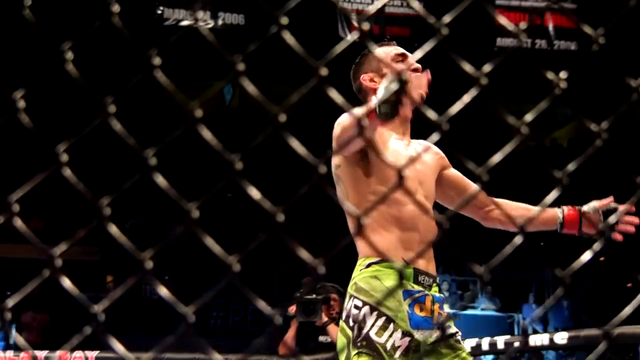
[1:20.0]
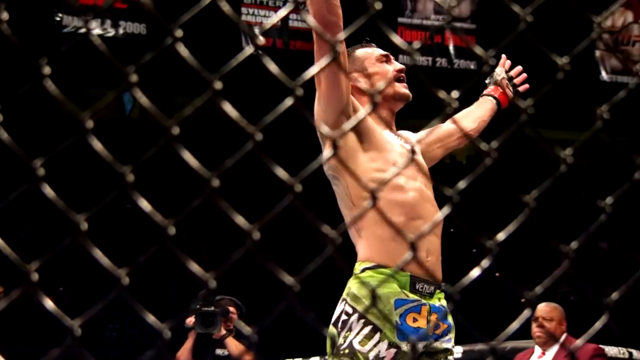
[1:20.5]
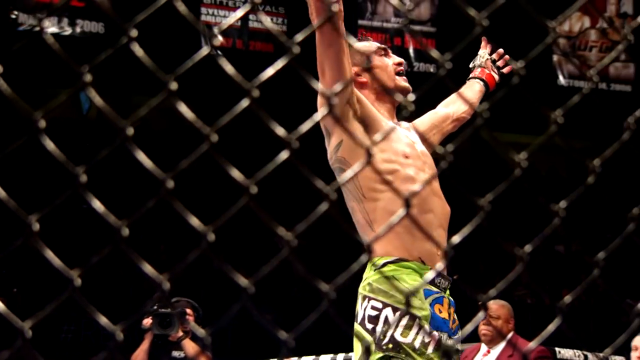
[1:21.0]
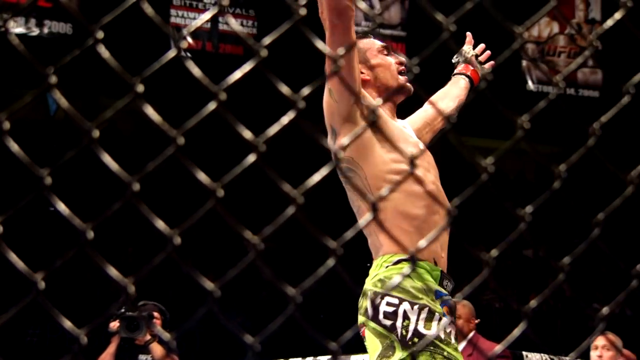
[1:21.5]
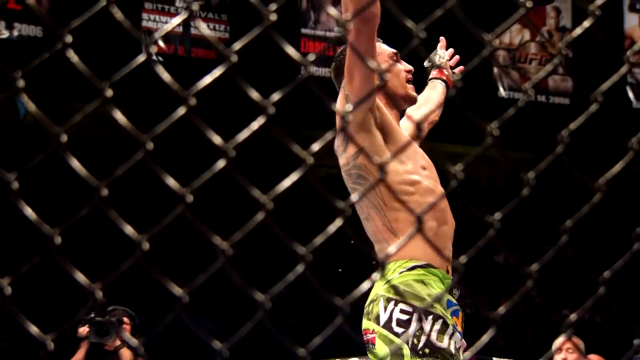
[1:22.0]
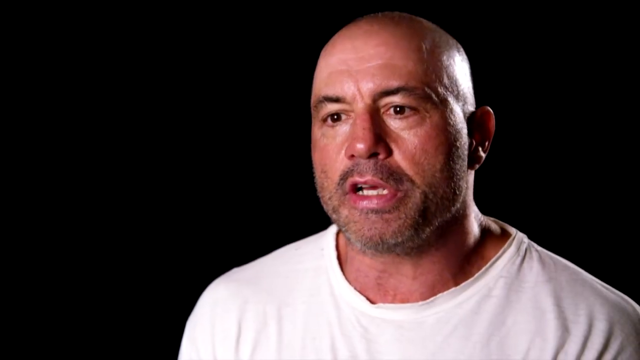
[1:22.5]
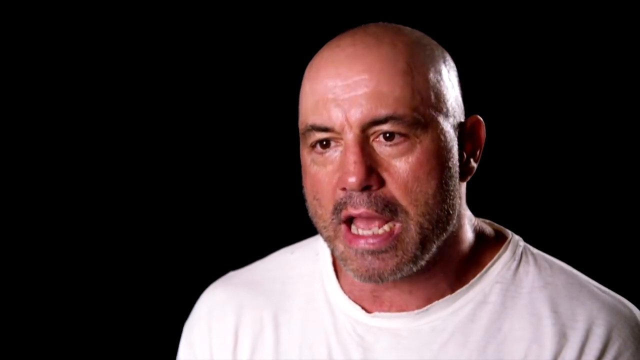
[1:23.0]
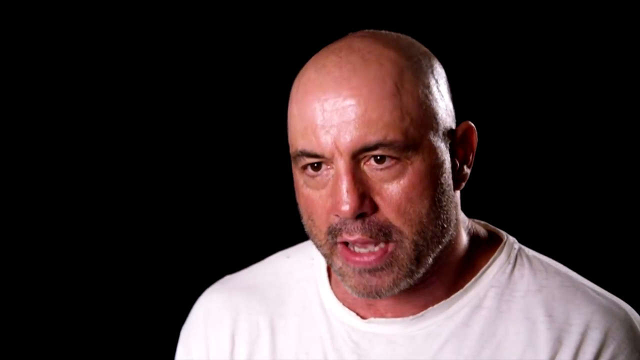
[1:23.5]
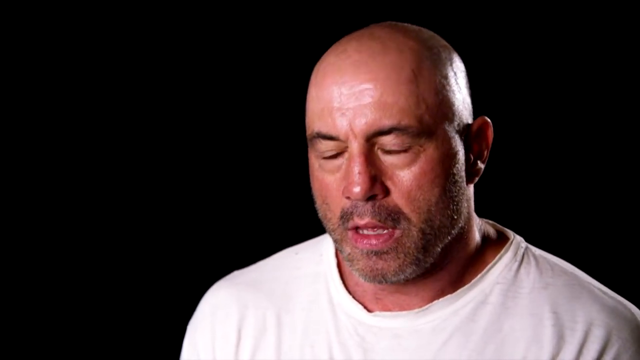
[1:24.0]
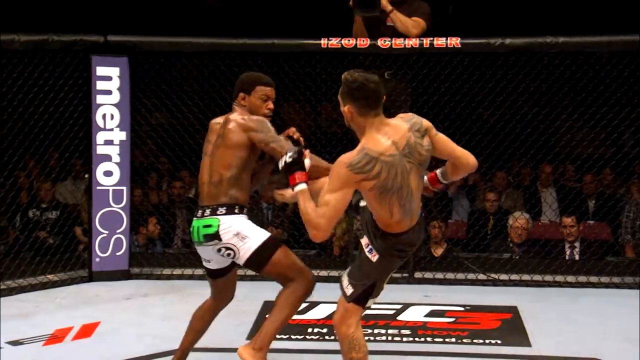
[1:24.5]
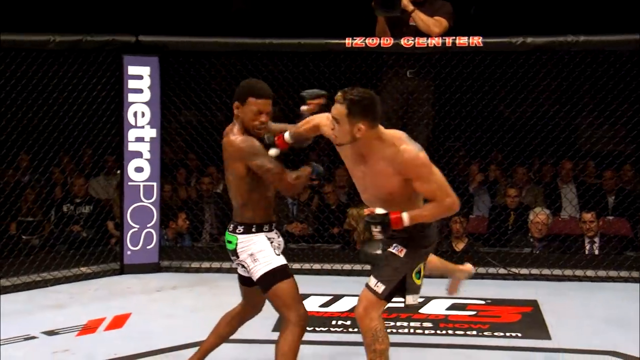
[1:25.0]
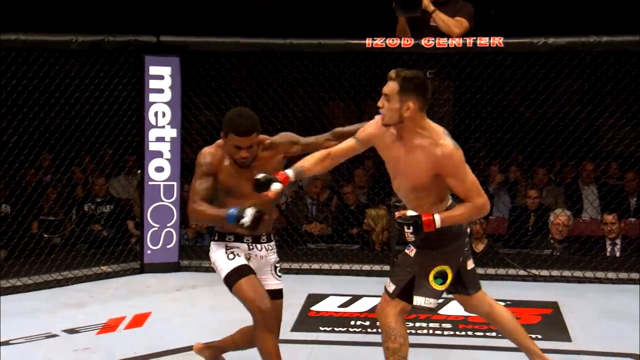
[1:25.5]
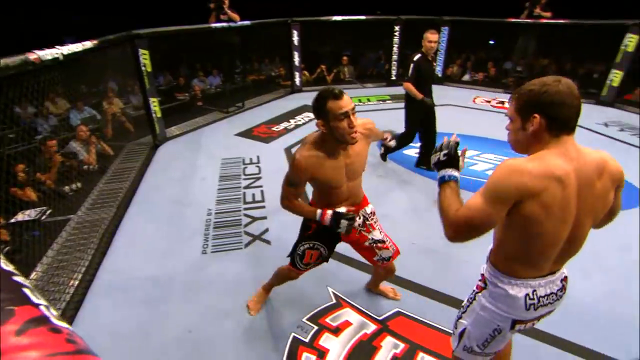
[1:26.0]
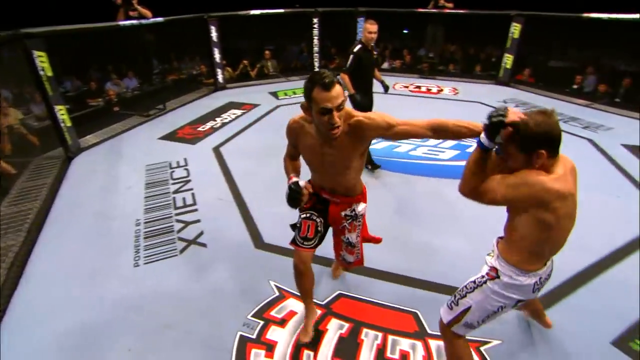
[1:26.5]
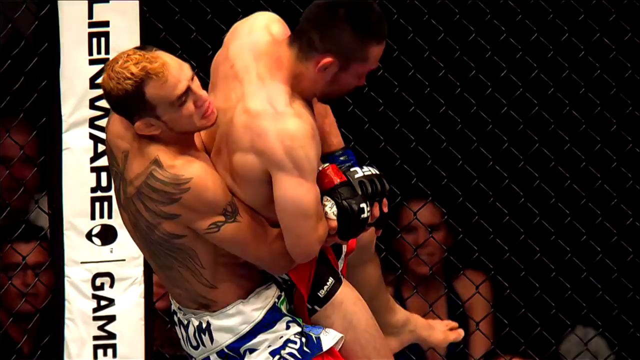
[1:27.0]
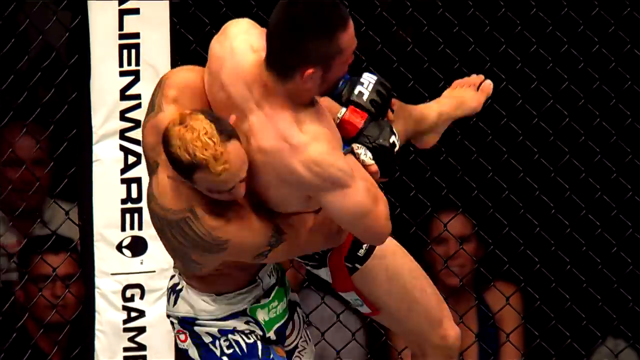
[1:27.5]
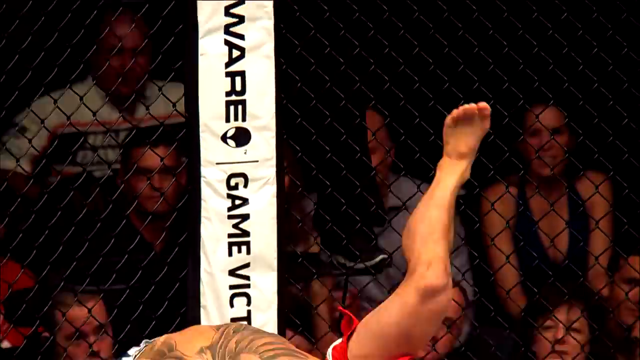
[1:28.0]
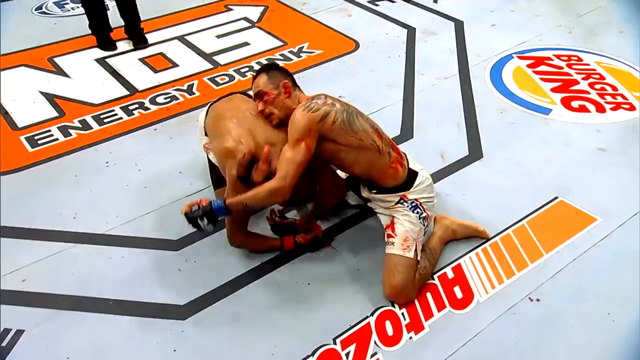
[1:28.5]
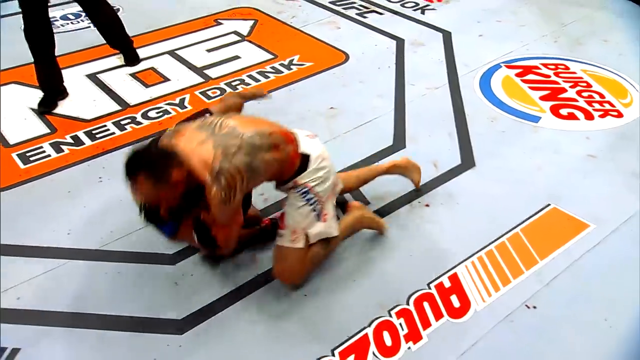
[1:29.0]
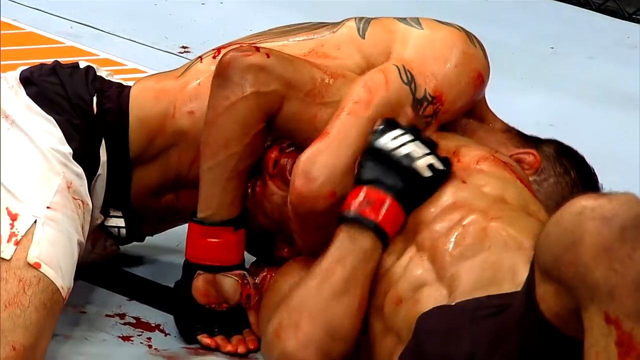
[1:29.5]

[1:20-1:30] A shirtless UFC fighter in yellow and black shorts lifts his arms in the air, smiling and cheering, with a mouth guard in and his ribs visible. A series of clips of Joe Rogan follows, in which he wears a white T-shirt and talks. More clips show UFC fighters grappling on the ground; in one shot they are covered in blood, with blood all over the ring. Shirtless men in shorts punch and kick, and at one point a fighter is slammed into the ground. It is a UFC promotional video made of clips of two people in an upcoming fight rather than one actual fight, apparently Ferguson versus Petits.